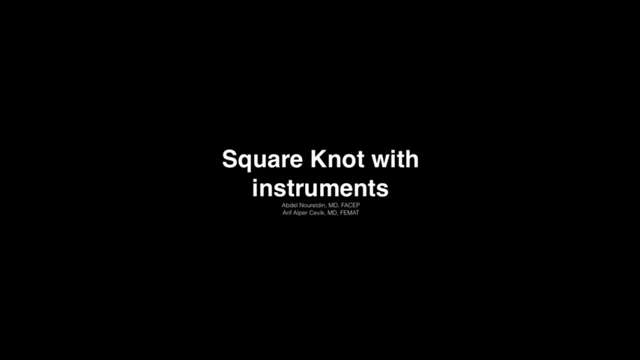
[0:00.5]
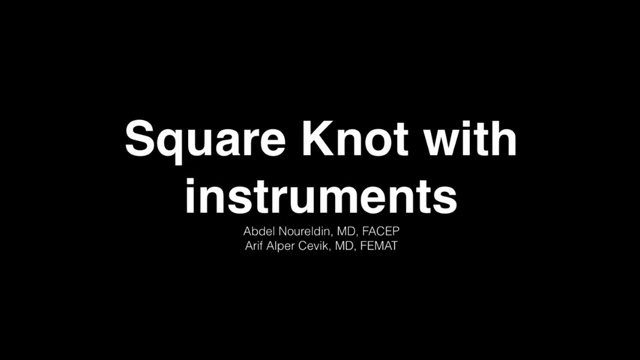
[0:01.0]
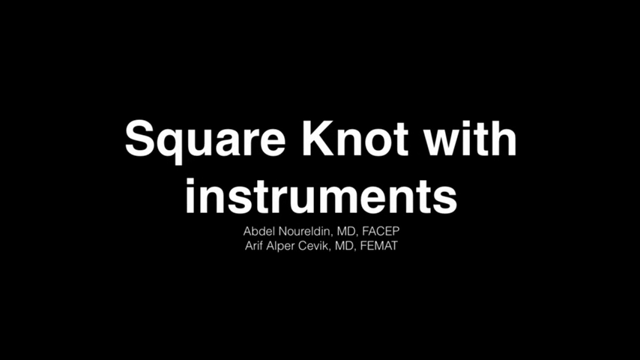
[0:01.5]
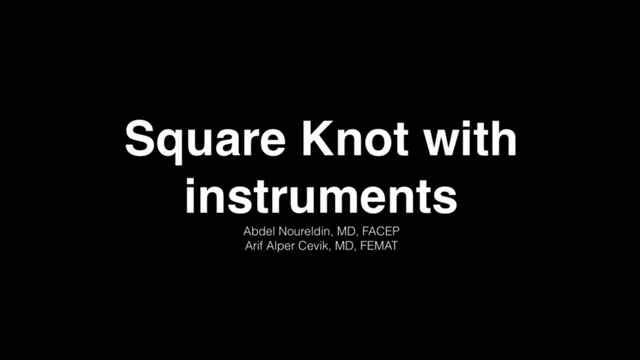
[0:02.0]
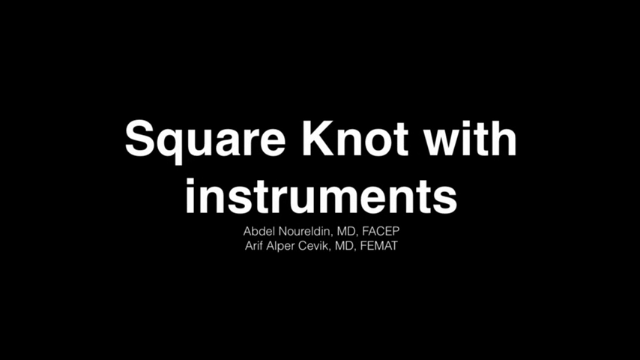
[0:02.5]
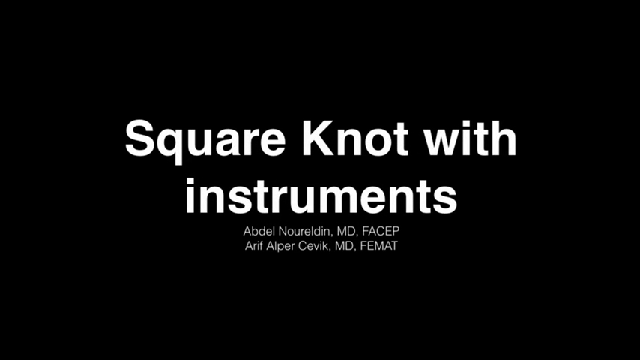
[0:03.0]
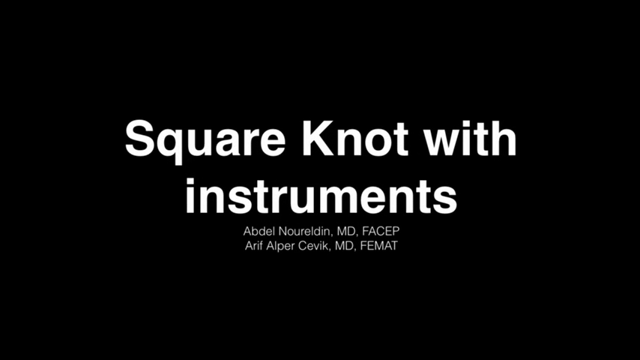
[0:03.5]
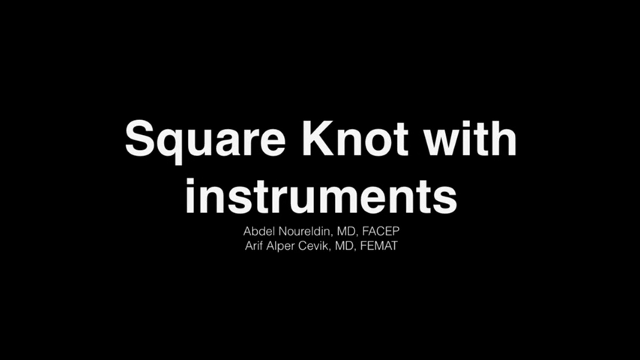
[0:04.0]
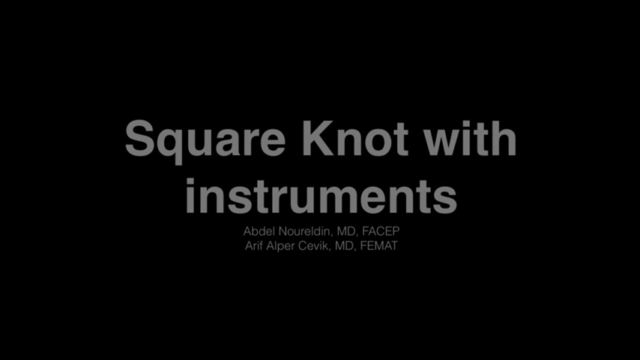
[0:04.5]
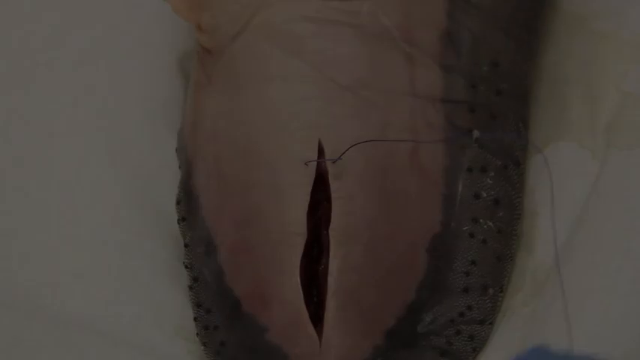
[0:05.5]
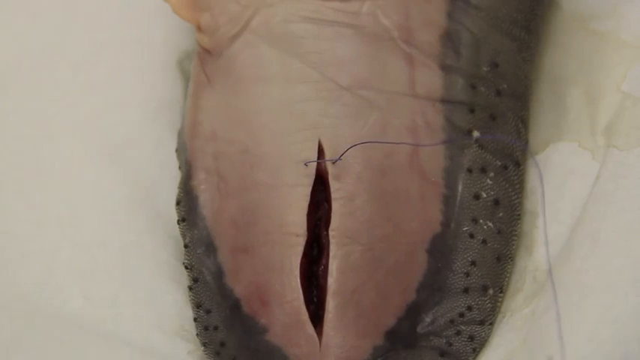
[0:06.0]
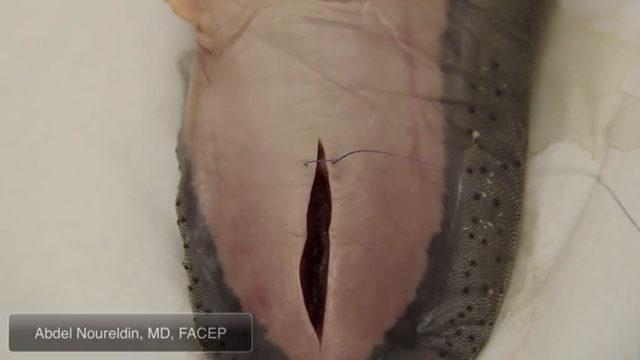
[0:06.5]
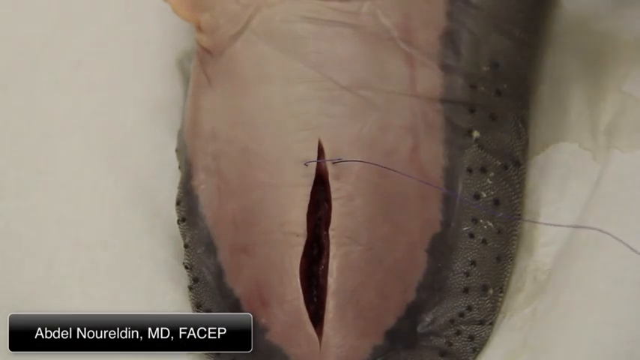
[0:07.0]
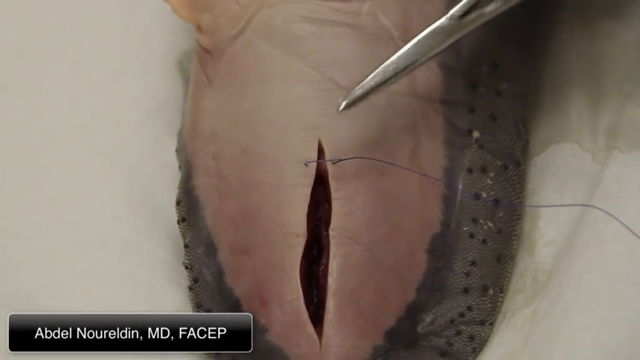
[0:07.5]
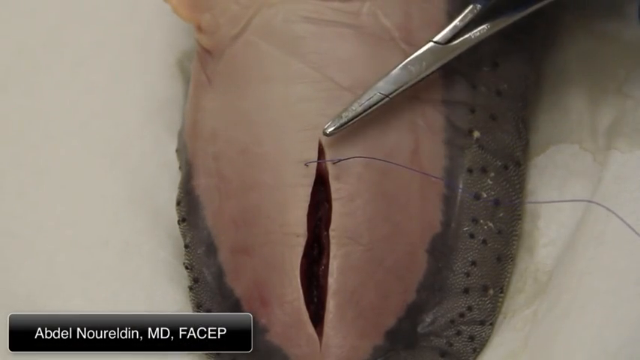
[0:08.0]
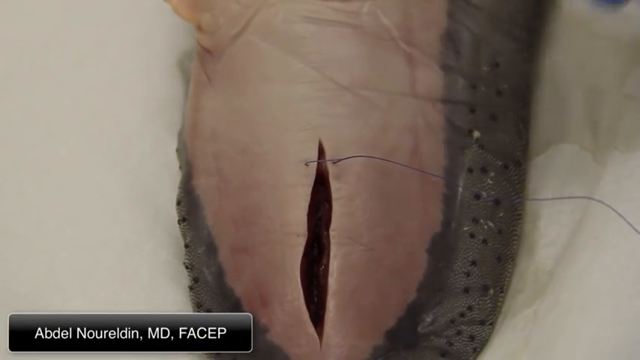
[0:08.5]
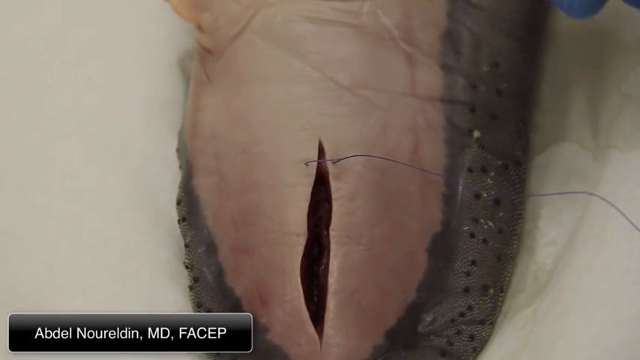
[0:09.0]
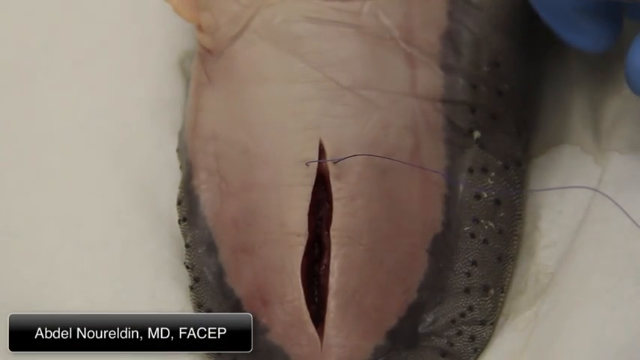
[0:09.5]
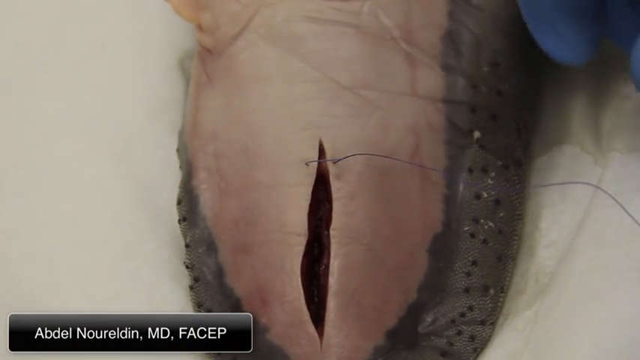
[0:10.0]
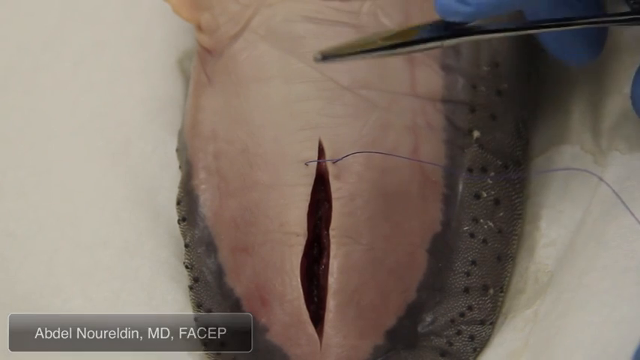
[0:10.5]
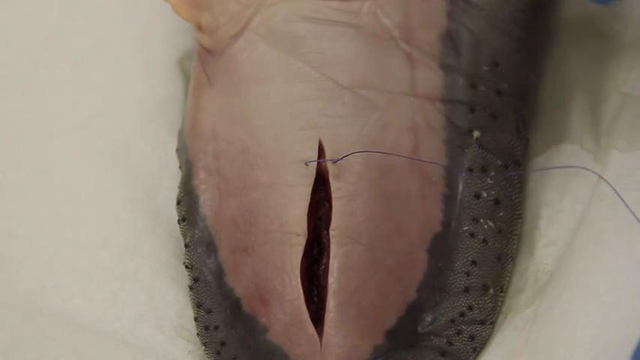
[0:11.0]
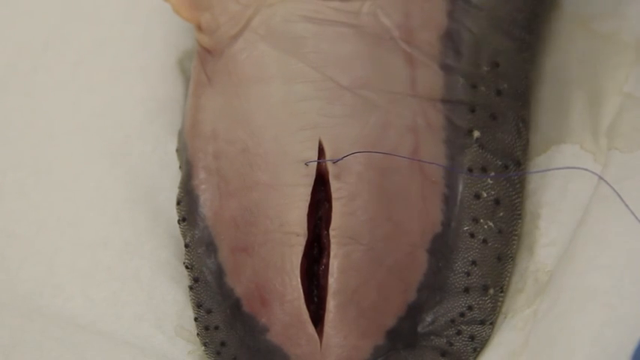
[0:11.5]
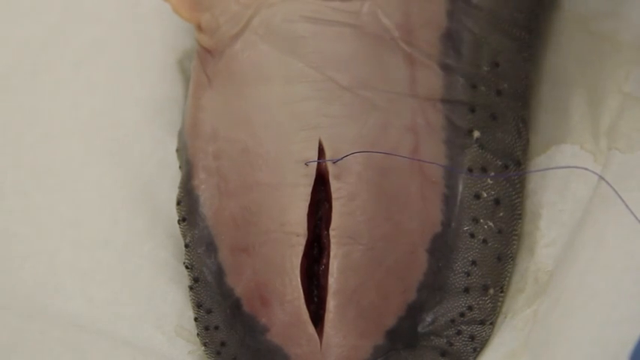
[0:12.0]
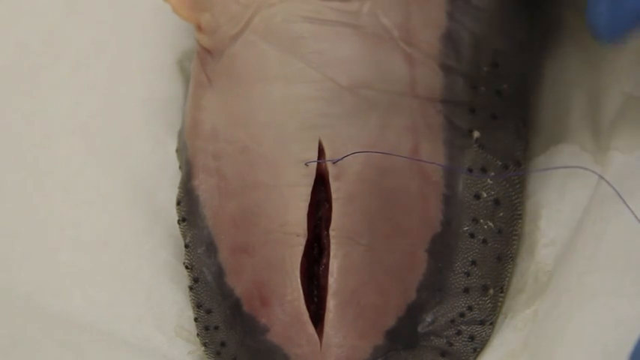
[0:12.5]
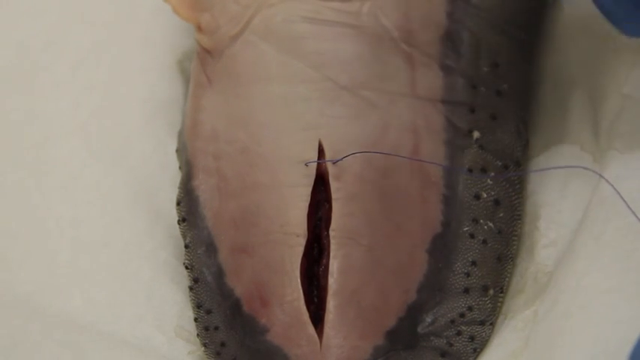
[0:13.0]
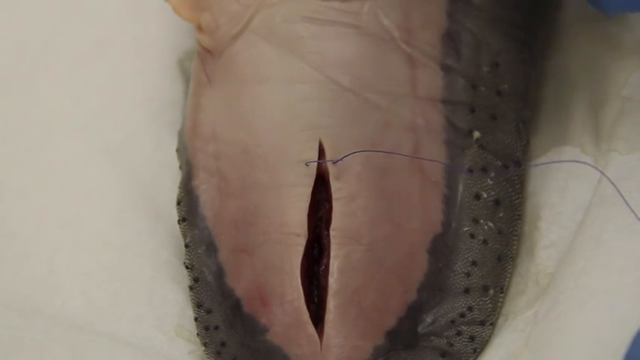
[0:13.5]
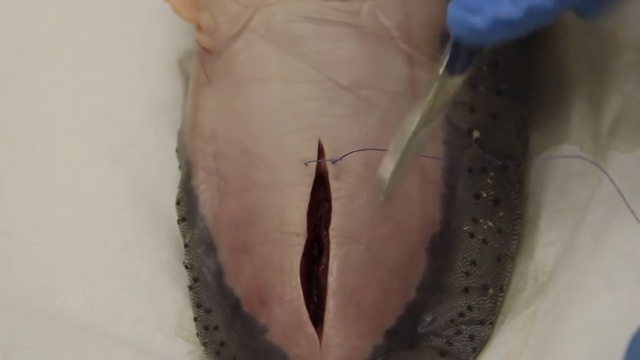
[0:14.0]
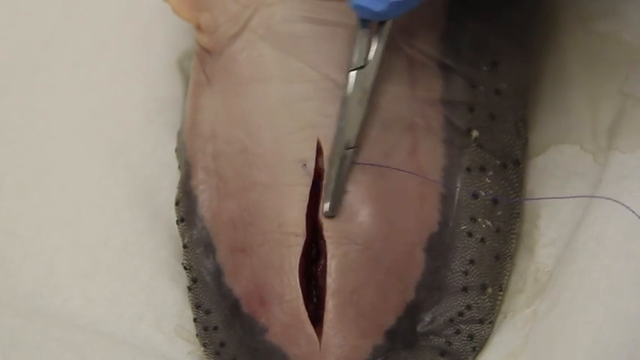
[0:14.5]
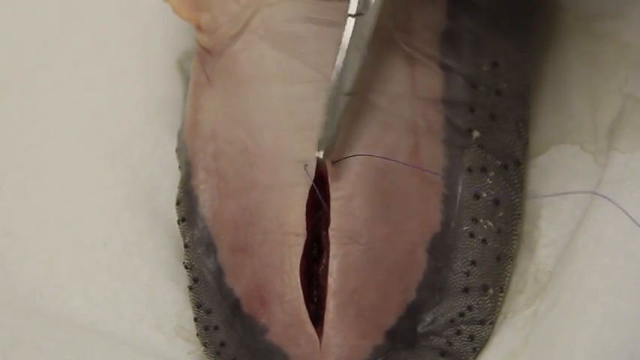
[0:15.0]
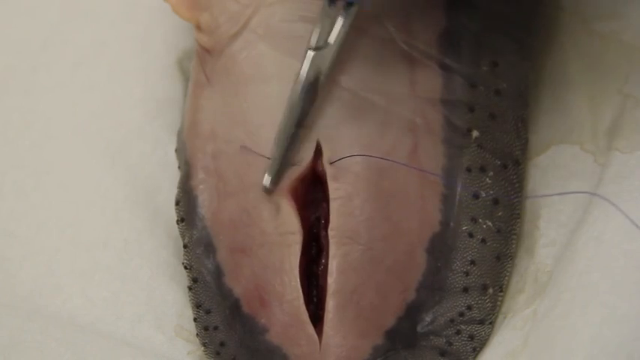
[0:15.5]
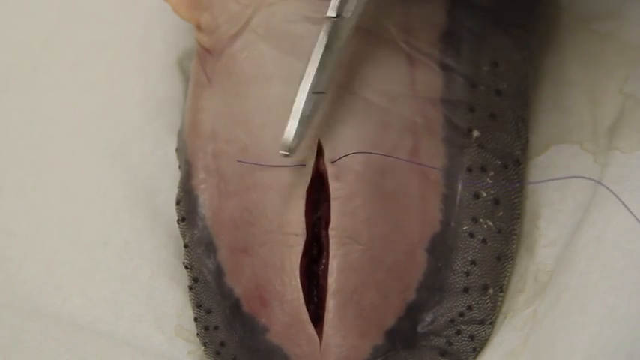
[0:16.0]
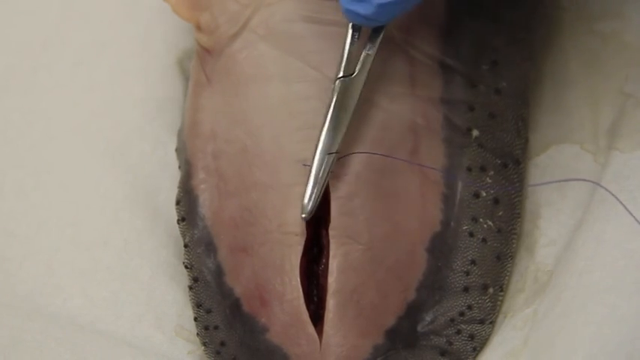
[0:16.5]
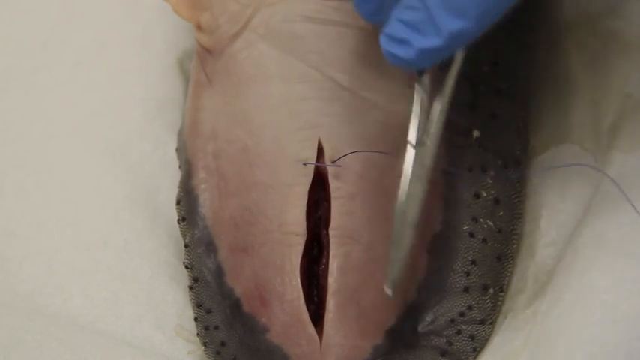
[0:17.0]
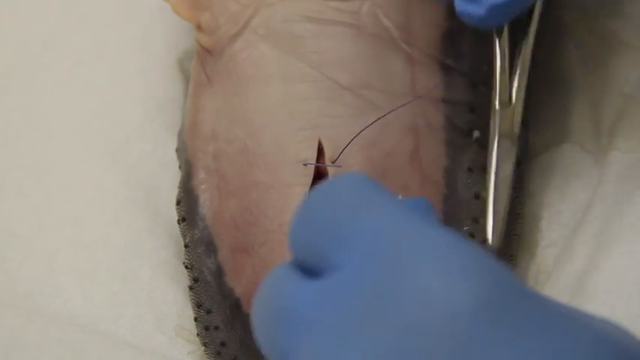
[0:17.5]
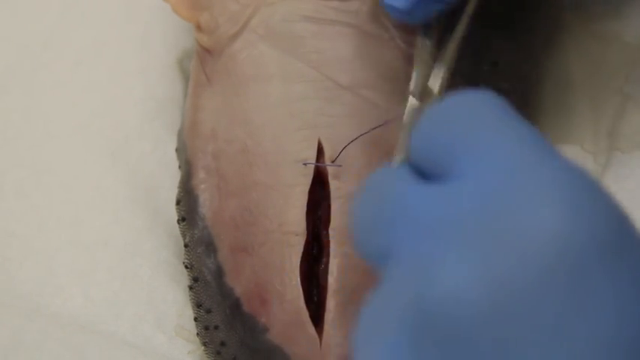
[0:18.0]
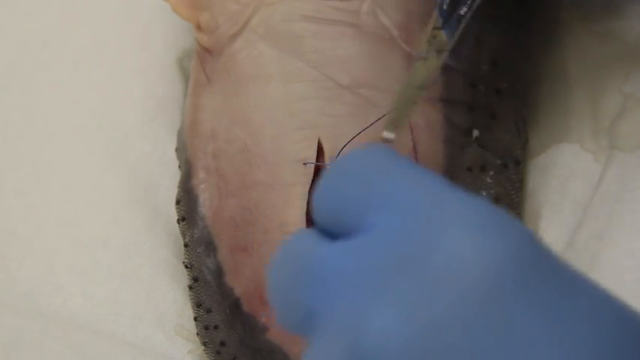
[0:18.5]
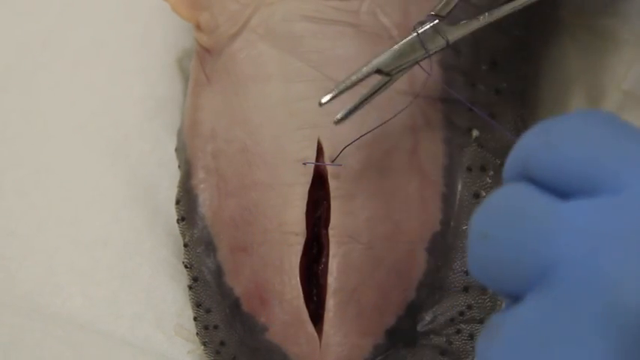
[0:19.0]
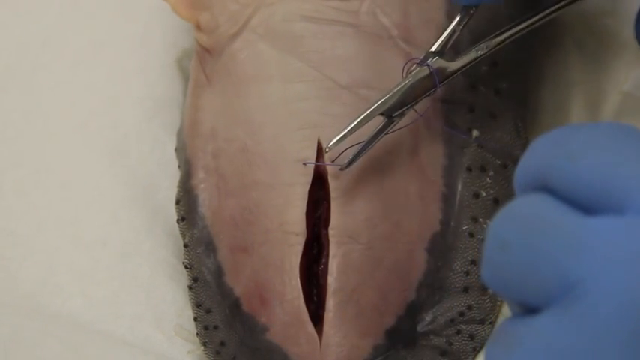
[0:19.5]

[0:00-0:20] The video is titled Square Knot with Instruments, by Abdel Nouraldine, MD, FACEP, and Arif Alper Seveg, MD, FEMAT. It shows an incision that looks like a surgical incision, with a stitch as if the patient is being stitched up, and a pair of scissors. Suture has already been put through, and the doctor, wearing blue gloves, shows the incision. This is apparently a surgical instruction video on how to tie a square knot with sutures that close a surgical wound. At the top of the wound there are two holes, one on each side, where the suture goes through, and the doctor separates the wound to show it and the top suture that goes through it. The wound looks like it has been cauterized, so it is not bleeding.